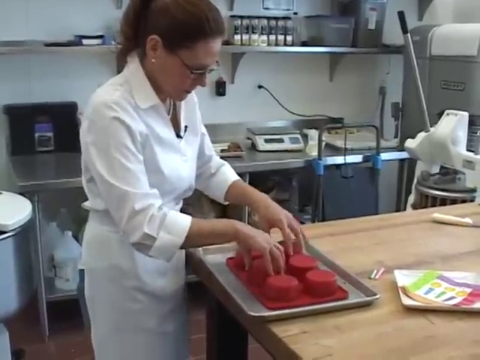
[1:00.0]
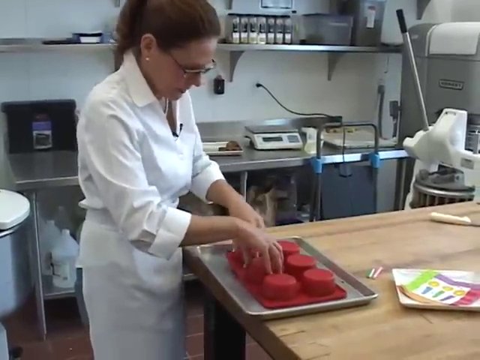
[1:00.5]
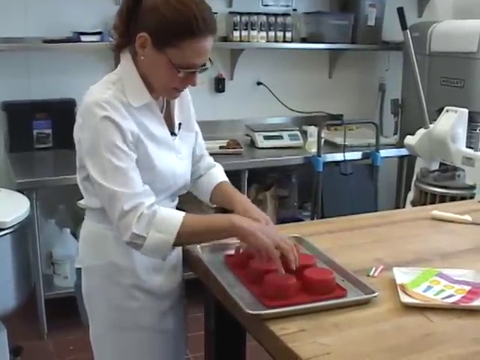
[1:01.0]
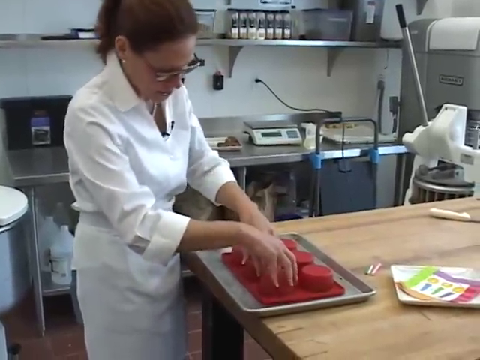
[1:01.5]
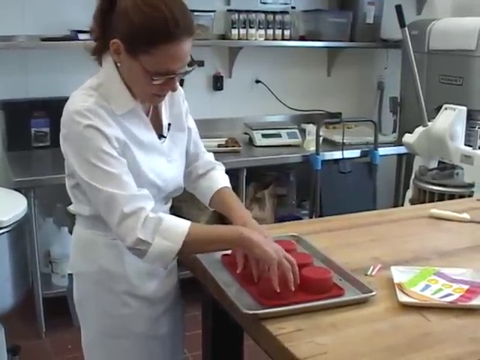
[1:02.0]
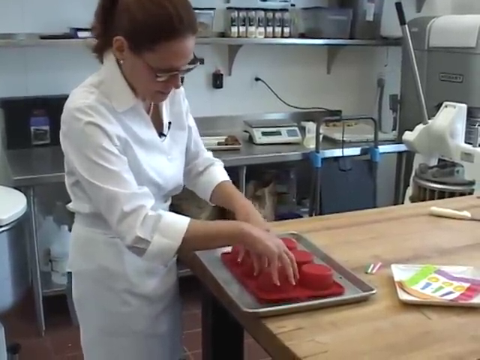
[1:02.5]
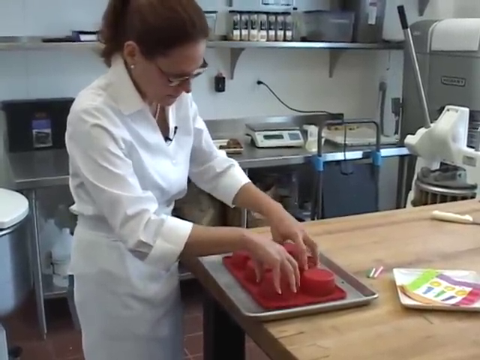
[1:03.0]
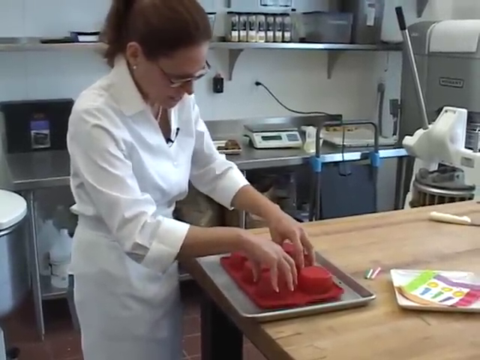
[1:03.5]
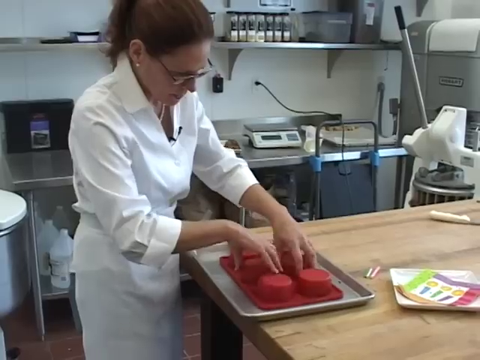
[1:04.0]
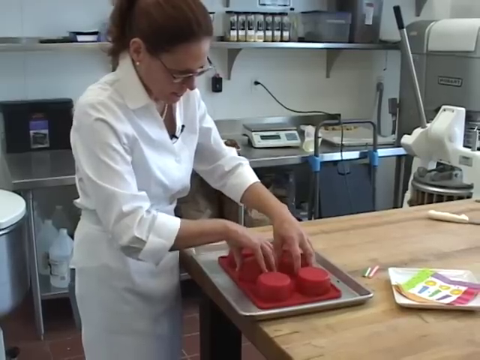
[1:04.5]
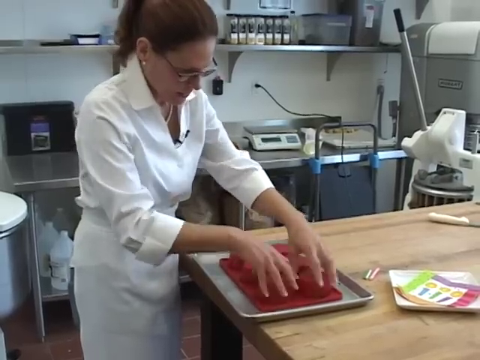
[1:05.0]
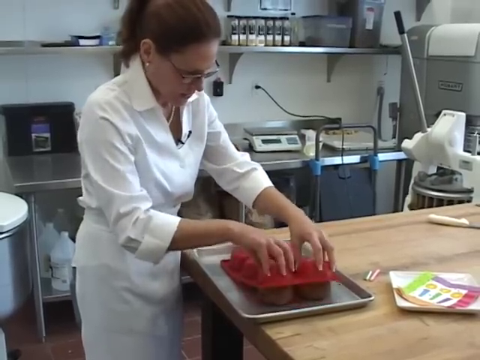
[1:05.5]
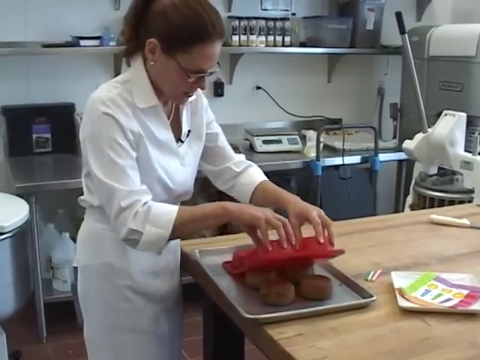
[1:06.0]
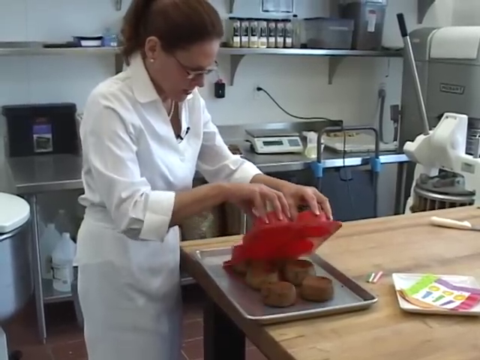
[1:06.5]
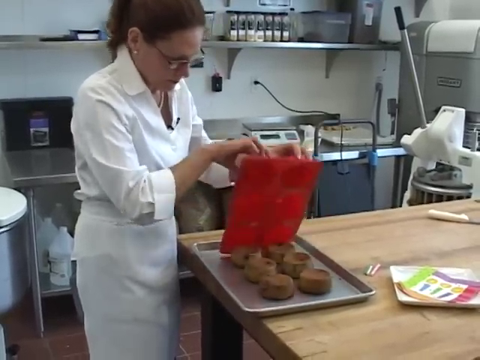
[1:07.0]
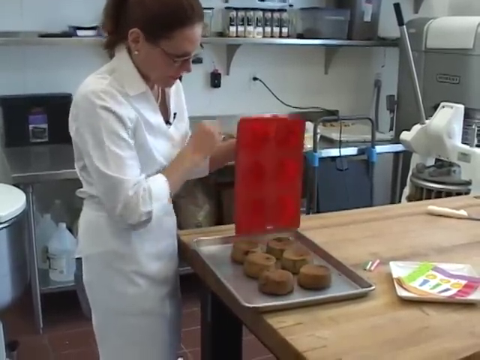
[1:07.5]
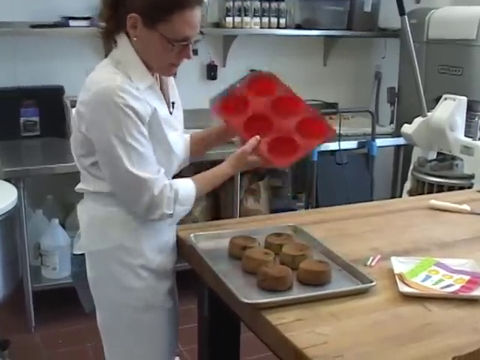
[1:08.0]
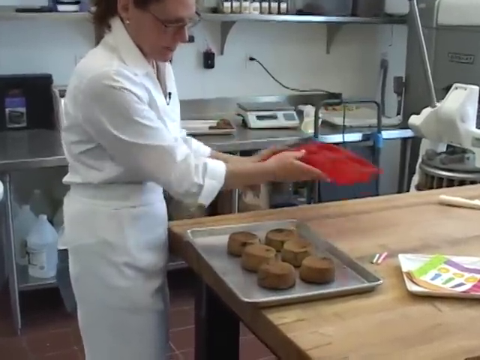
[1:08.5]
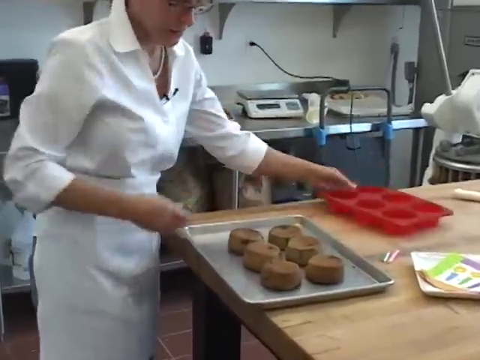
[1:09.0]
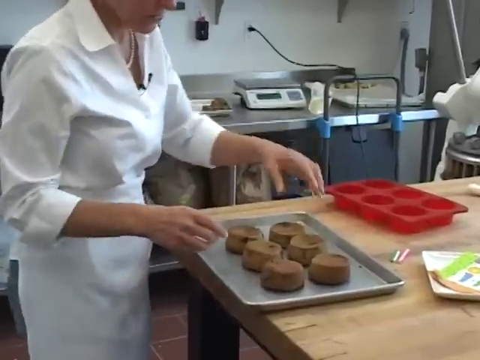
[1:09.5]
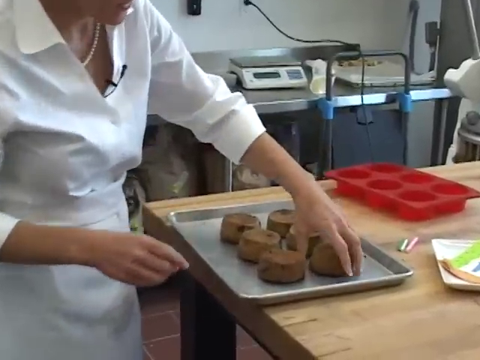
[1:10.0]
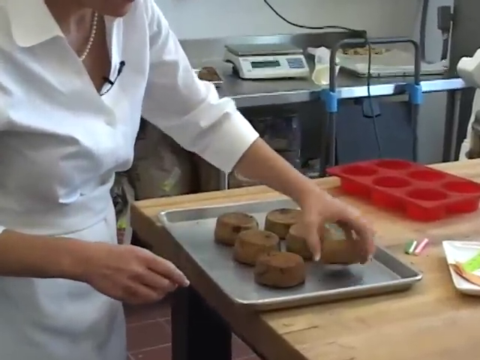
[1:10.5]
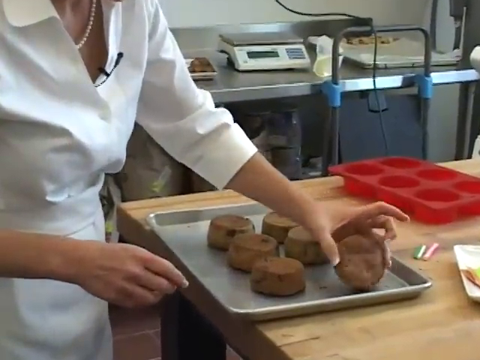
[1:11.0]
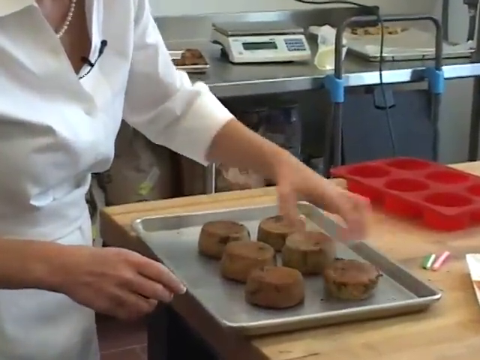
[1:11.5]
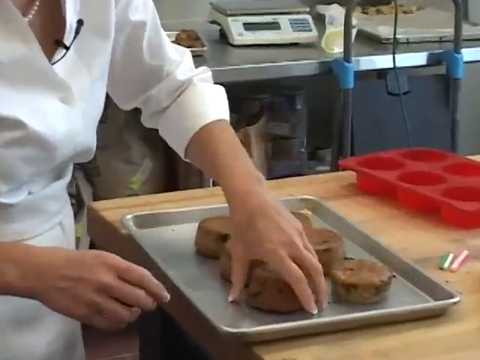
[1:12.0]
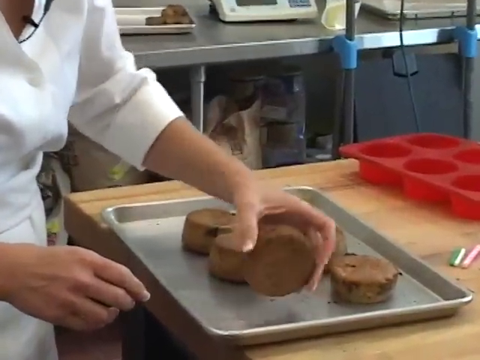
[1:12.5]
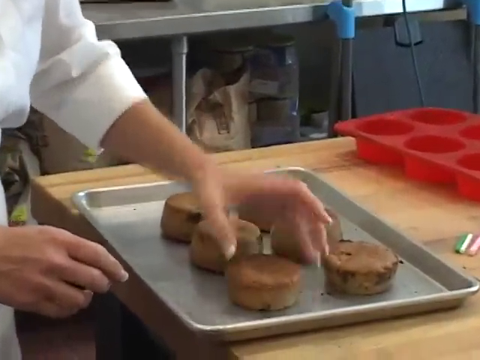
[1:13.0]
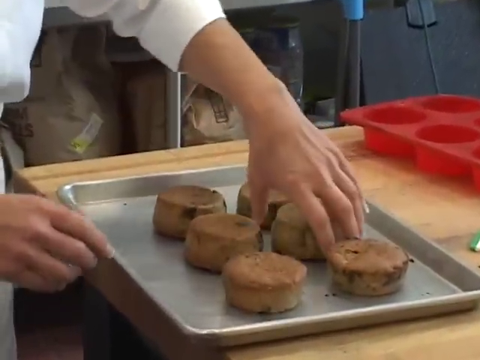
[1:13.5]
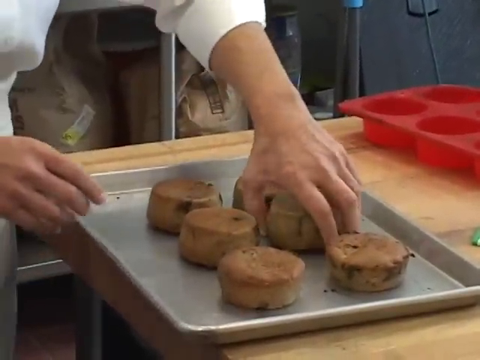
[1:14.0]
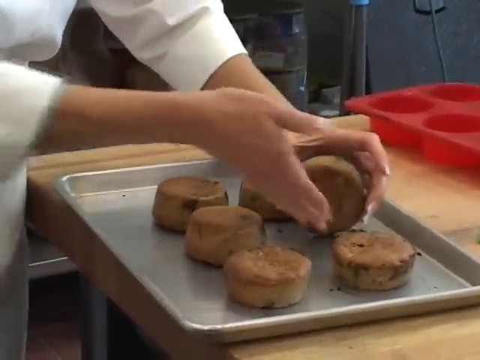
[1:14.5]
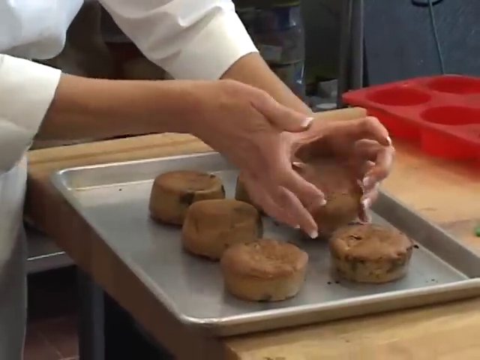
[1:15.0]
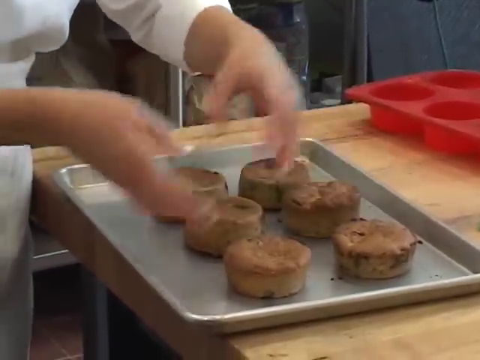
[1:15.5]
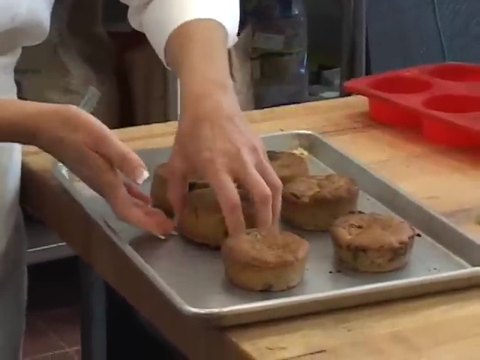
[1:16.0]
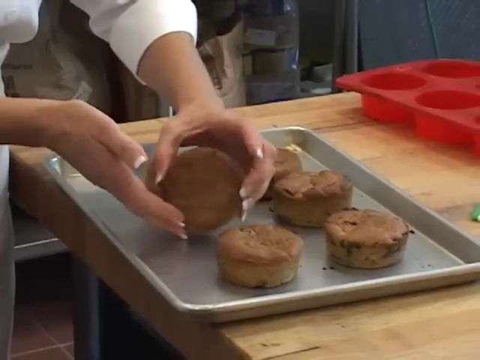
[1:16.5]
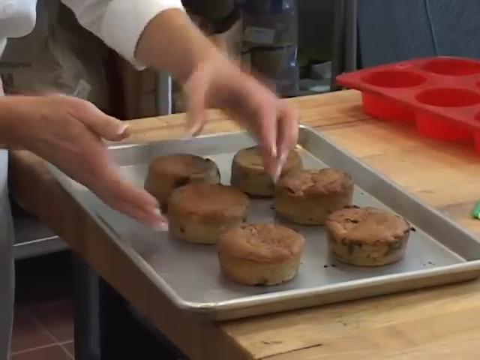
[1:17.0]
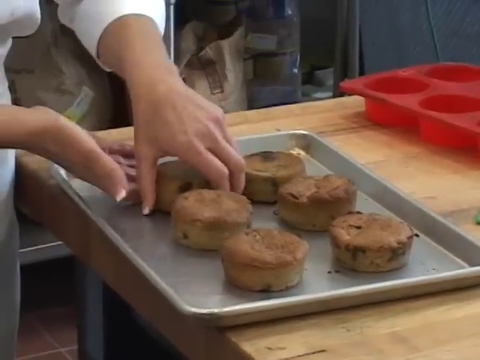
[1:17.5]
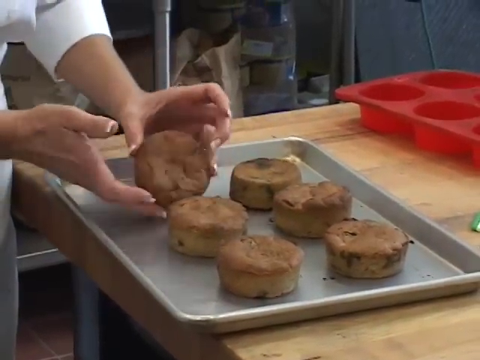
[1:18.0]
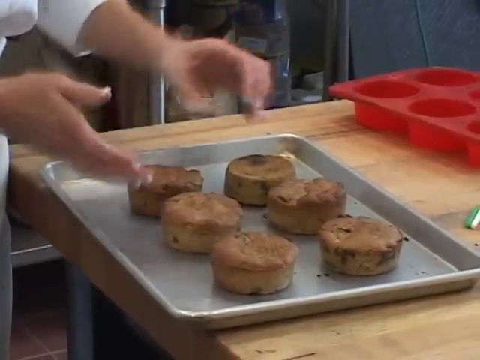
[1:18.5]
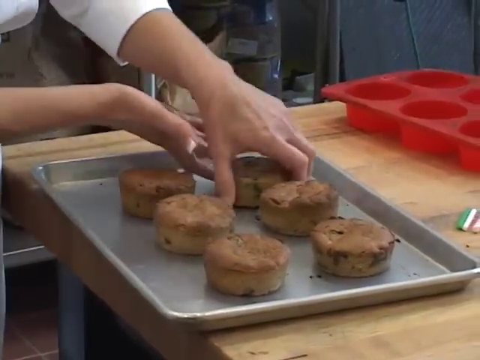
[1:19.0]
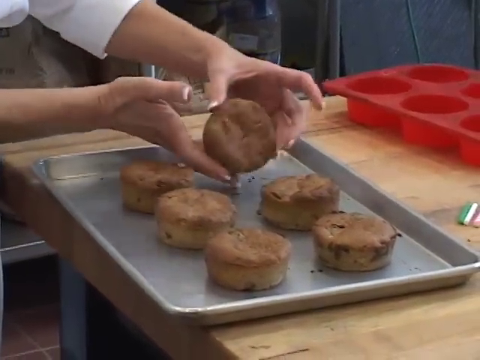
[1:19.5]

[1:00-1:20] The woman dressed in white is still pushing the muffins out of the muffin holder. After some minutes of pressing on it, she slowly removes the muffin holder, and all six muffins are placed on the pan. She goes around turning each one upside down so they face up. Their tops are golden brown, and their edges are also very golden brown. There is crust on top of them, and some seem browner than others and look like they may have been burnt.